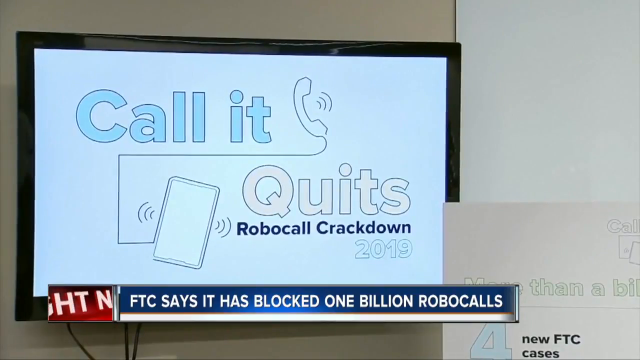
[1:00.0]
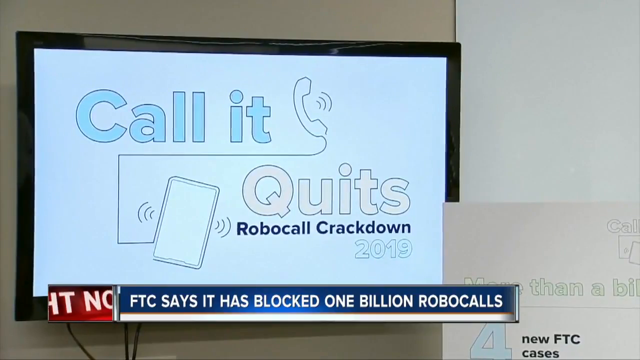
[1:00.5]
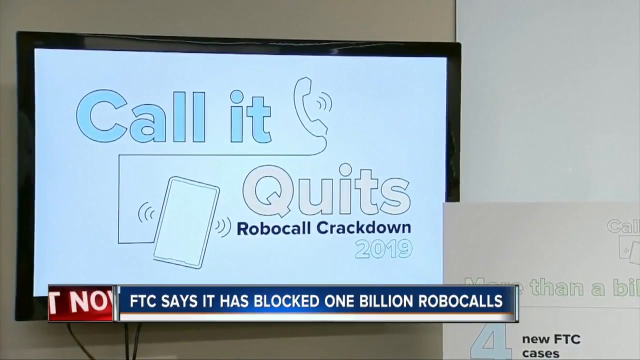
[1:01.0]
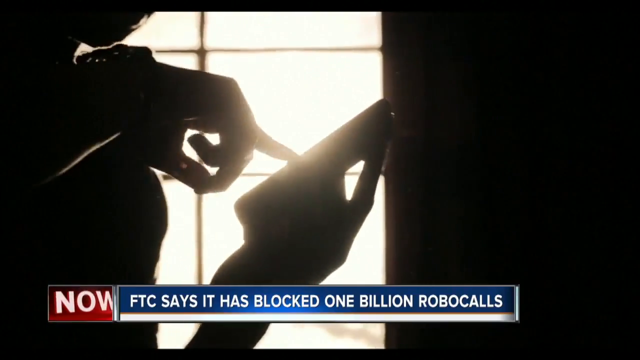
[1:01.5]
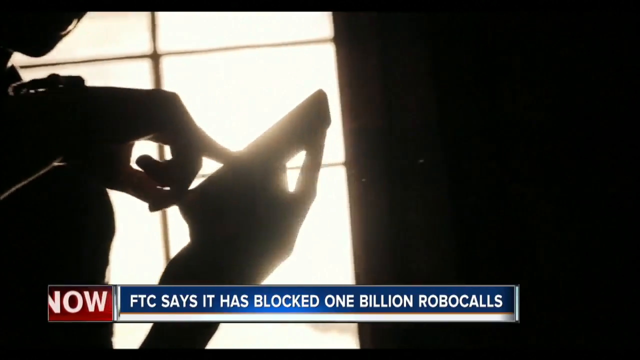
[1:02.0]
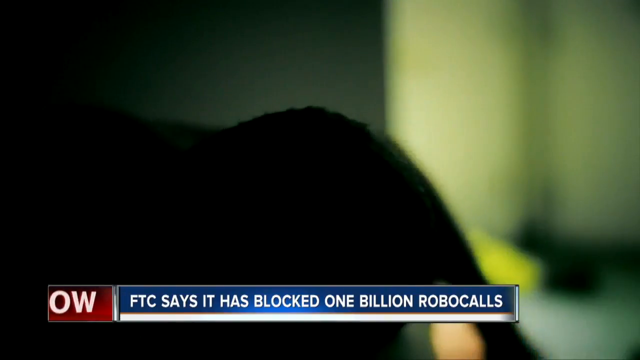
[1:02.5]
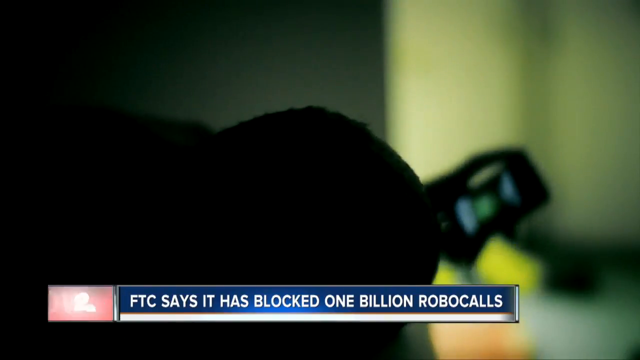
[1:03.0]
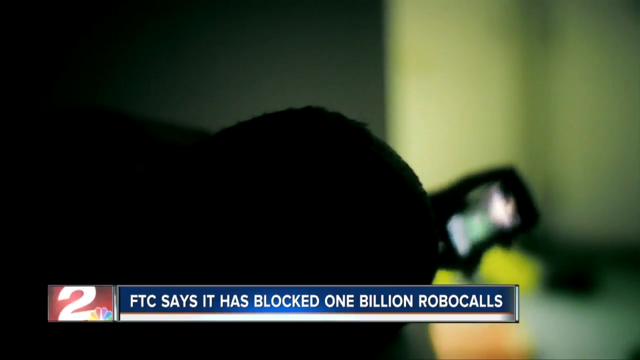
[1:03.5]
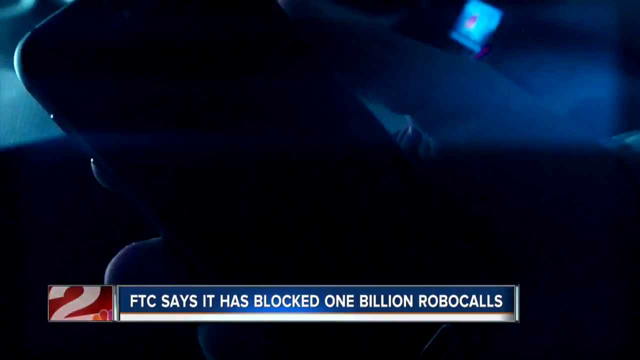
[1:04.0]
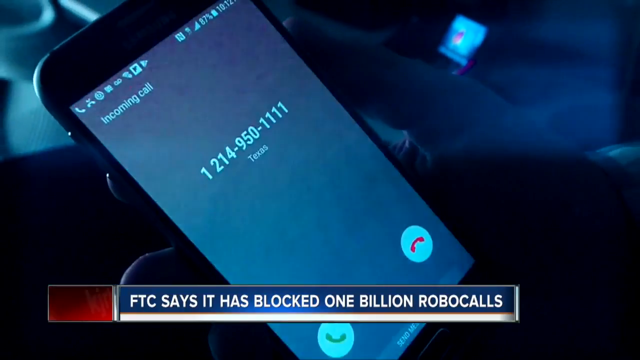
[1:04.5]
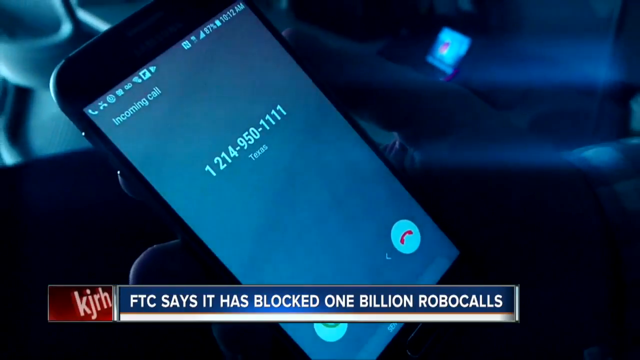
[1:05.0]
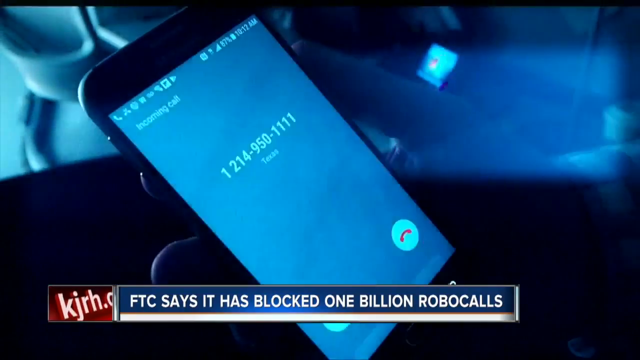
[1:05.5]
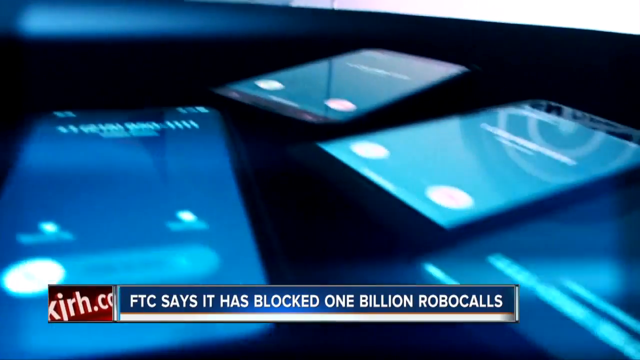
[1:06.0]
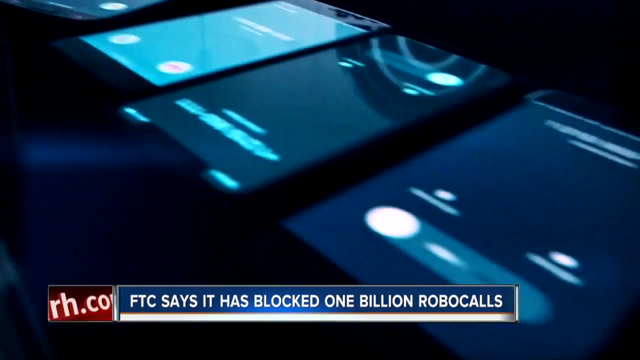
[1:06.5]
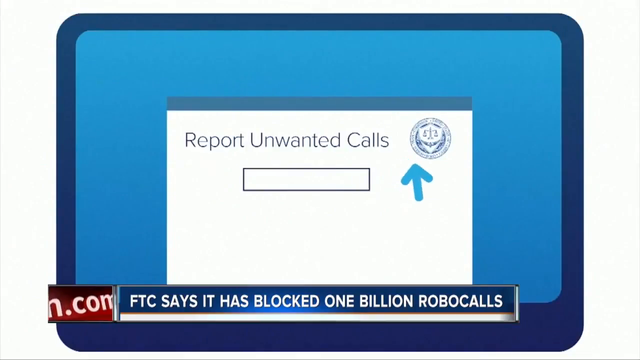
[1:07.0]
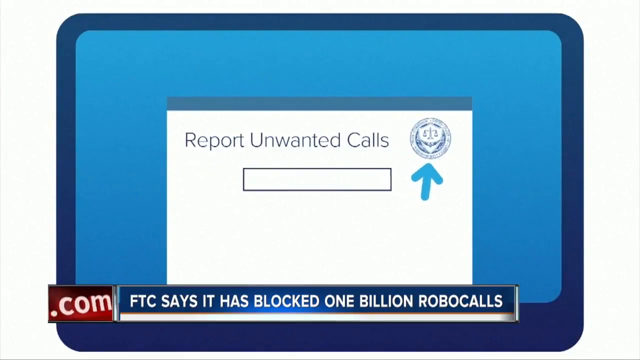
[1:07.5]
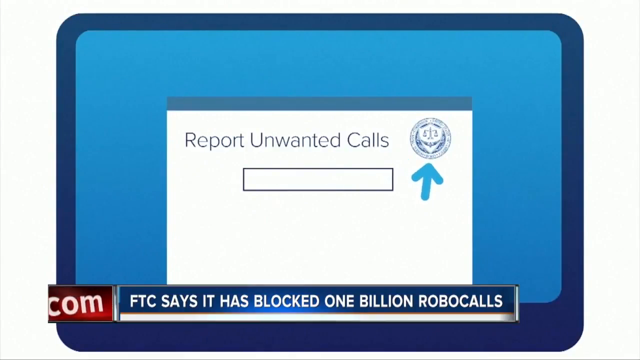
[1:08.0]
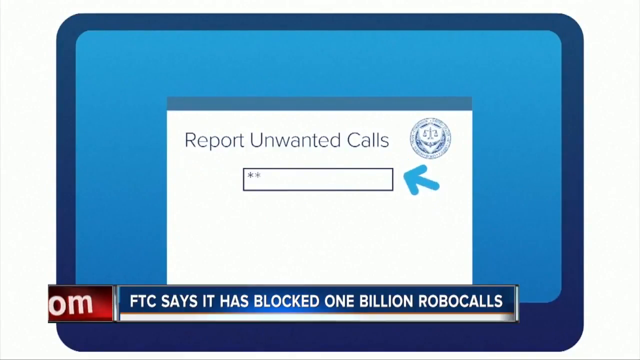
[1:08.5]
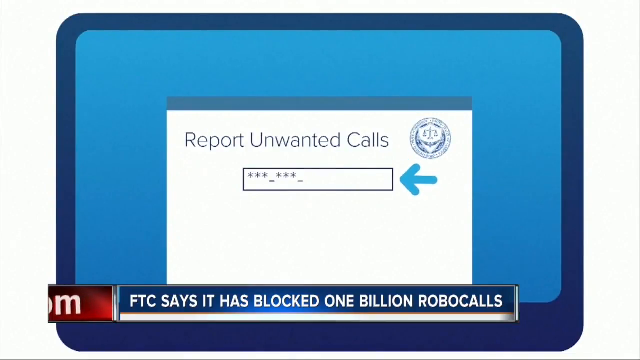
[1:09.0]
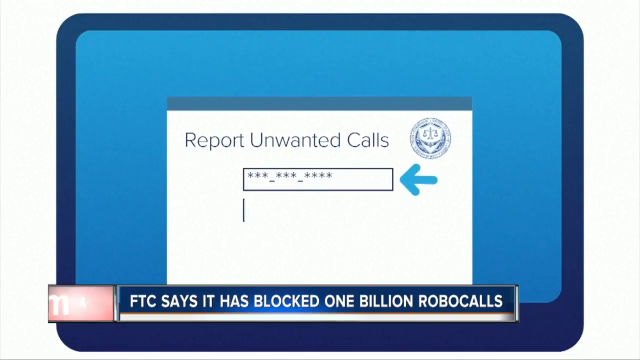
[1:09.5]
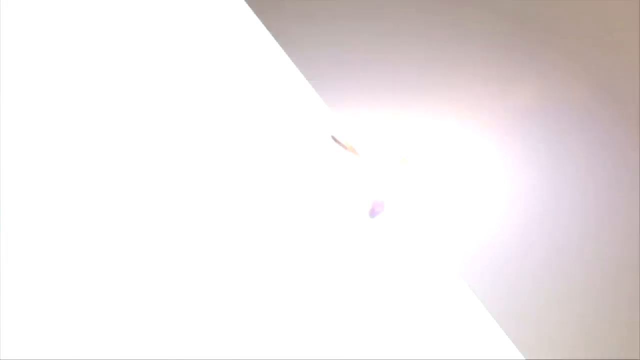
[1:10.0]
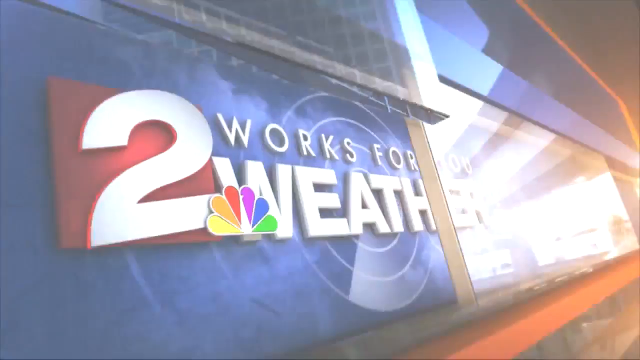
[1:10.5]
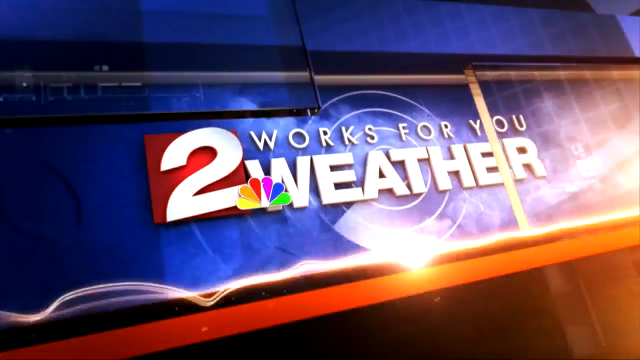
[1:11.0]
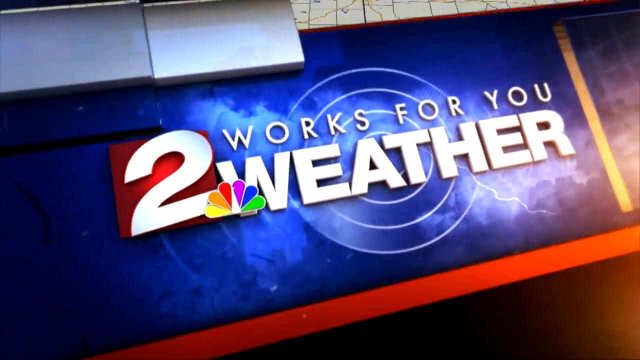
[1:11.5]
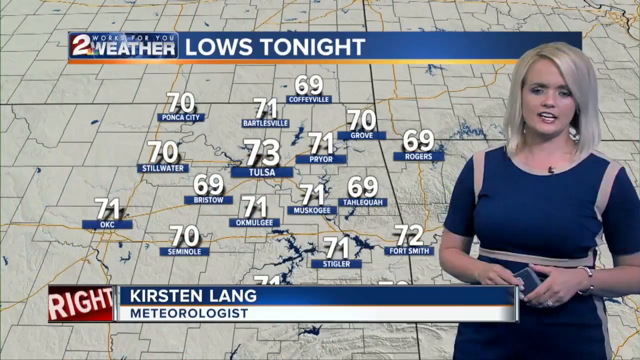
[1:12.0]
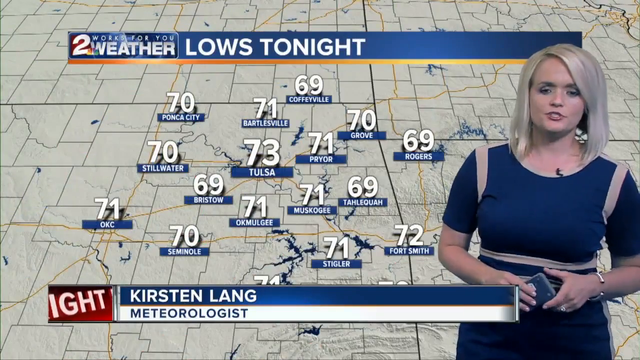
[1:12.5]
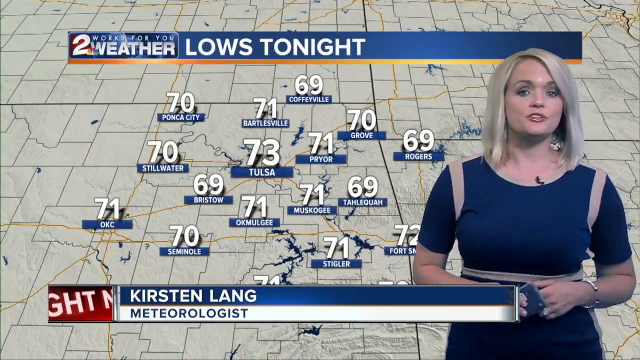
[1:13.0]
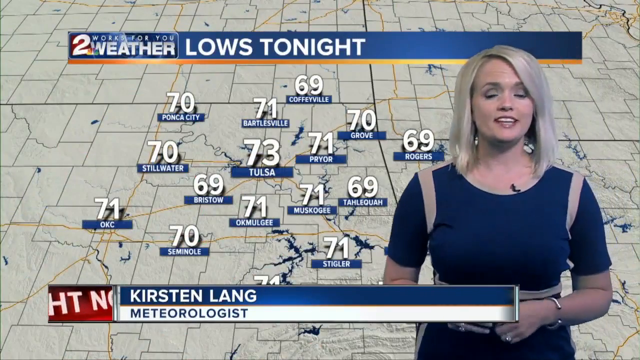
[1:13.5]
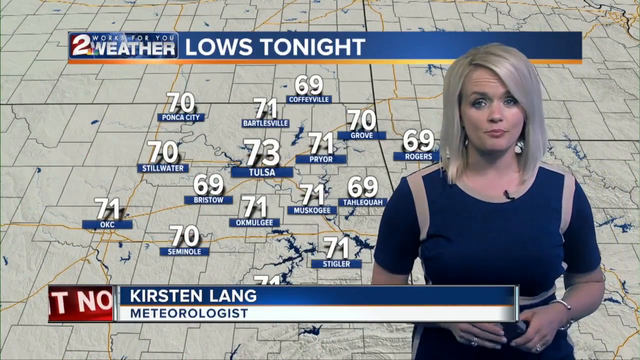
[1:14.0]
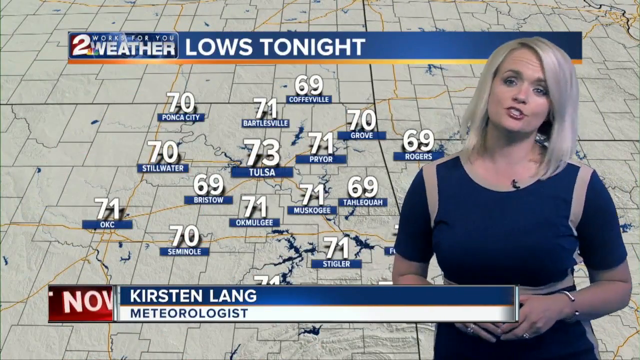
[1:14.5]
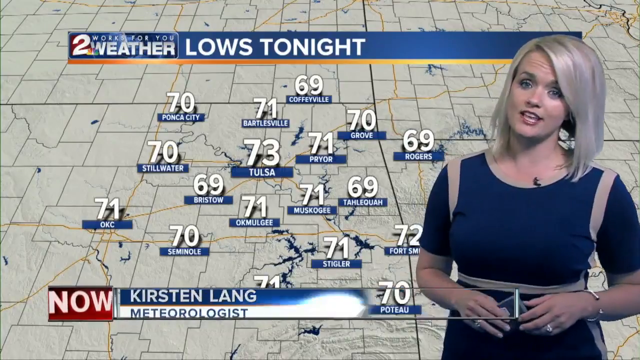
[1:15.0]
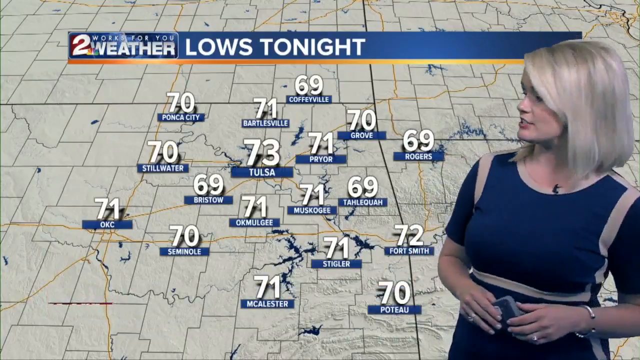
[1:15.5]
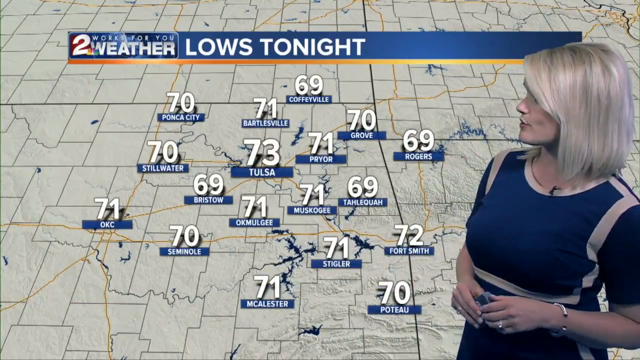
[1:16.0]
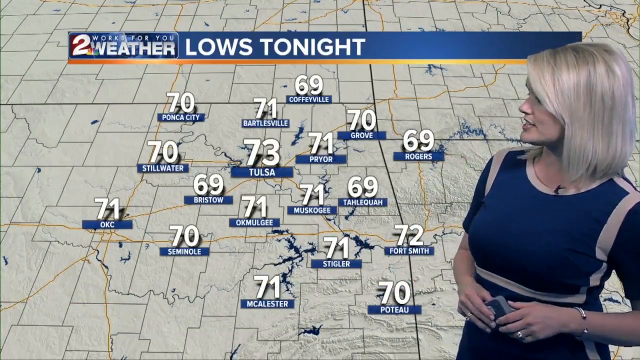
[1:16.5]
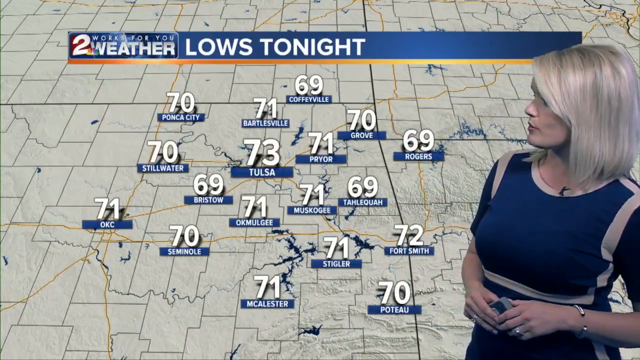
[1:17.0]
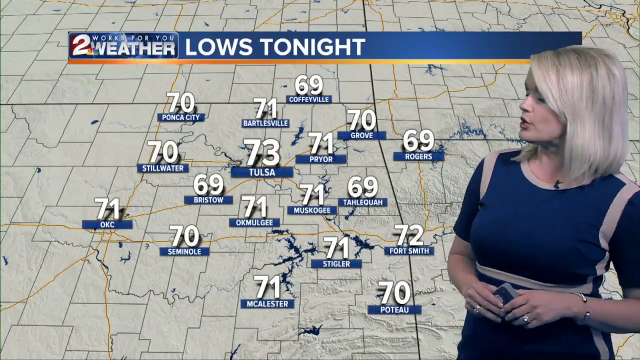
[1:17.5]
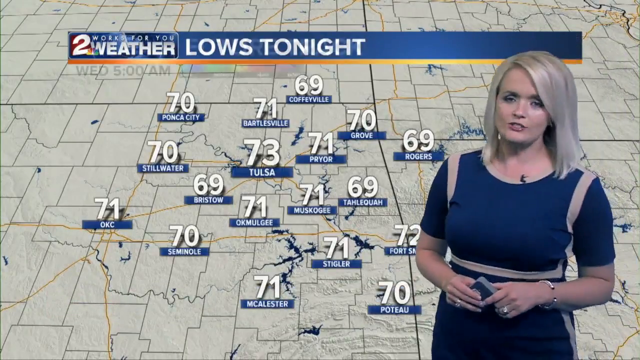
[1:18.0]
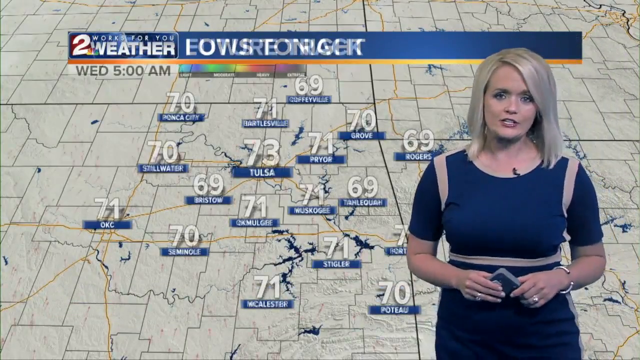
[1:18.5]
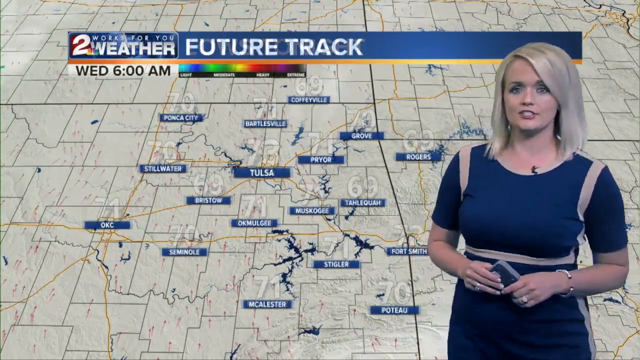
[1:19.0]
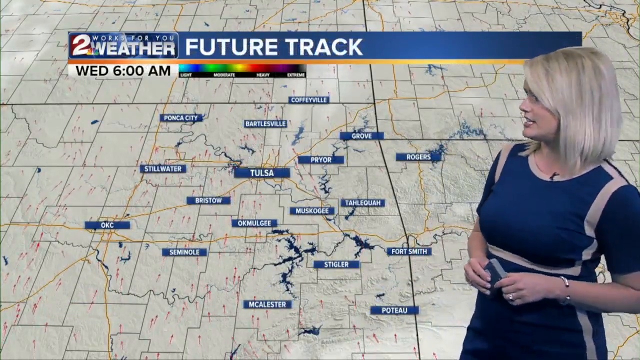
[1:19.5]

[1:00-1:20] The "Call It Quits Robocall Crackdown 2019" image is on screen, with the caption at the bottom reading "the FTC says it has blocked 1 billion robocalls." A silhouetted person types on a cell phone, apparently meant to be sending calls. A cell phone screen shows "incoming call" with the number 1214-950-1111 in the middle, a Texas number. A whole bunch of cell phones sit on a table, as if all trying to dial out. An image reading "report unwanted calls," seemingly from a website, shows an arrow pointing to a box for typing in a phone number. The "two works for you" graphic returns with "weather" below it and the NBC peacock logo. A Caucasian woman with shoulder-length straight blonde hair appears, wearing a blue dress with beige stripes around the shoulders and at the waist, and holding a remote clicker to change the screen behind her. Her backdrop is a map zoomed in on what appears to be mostly the Oklahoma area, with temperatures listed on it. The graphic at the top reads "lows tonight" and the graphic at the bottom reads "Kirsten Lange, meteorologist," and she is talking.